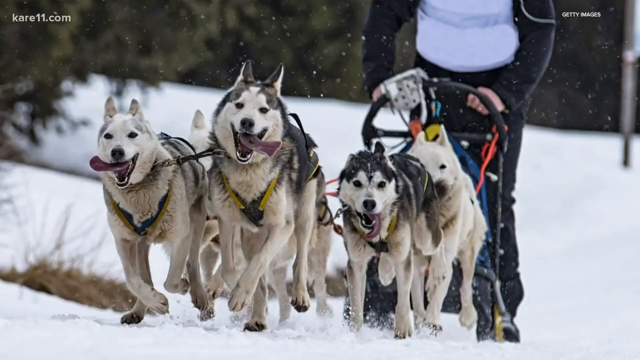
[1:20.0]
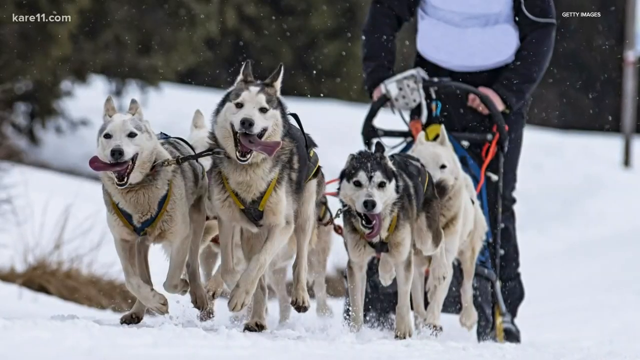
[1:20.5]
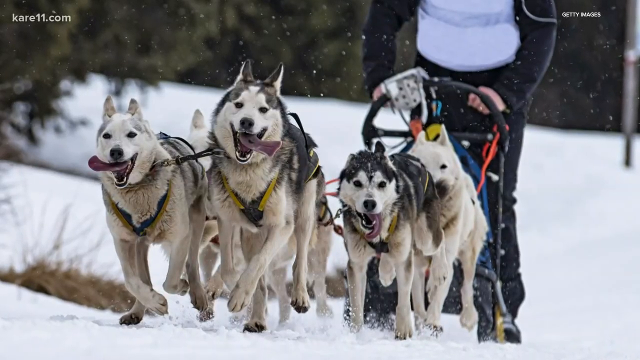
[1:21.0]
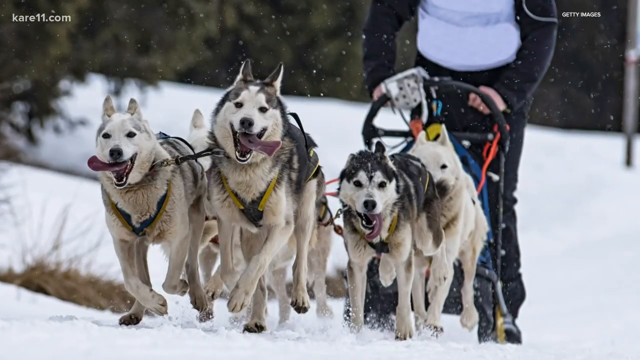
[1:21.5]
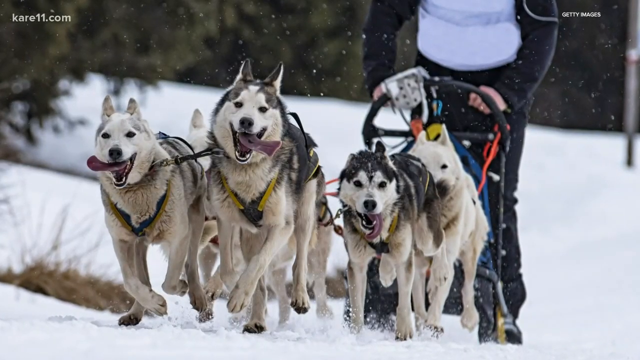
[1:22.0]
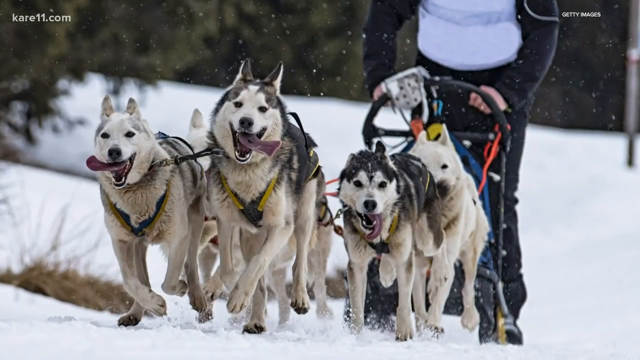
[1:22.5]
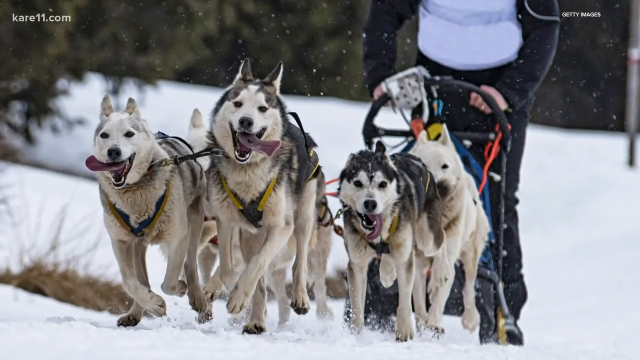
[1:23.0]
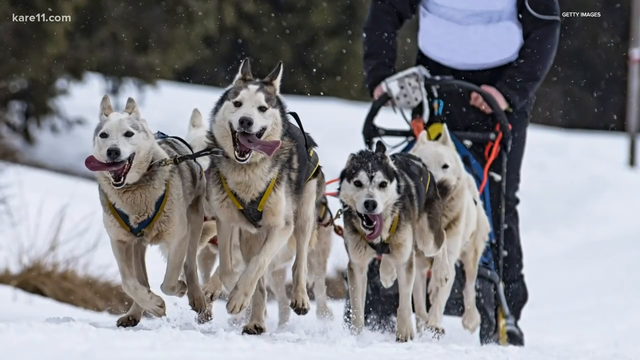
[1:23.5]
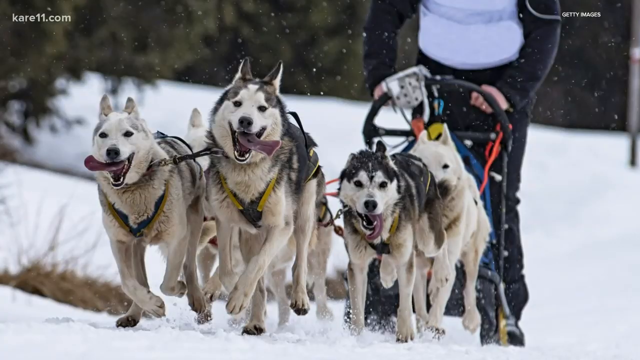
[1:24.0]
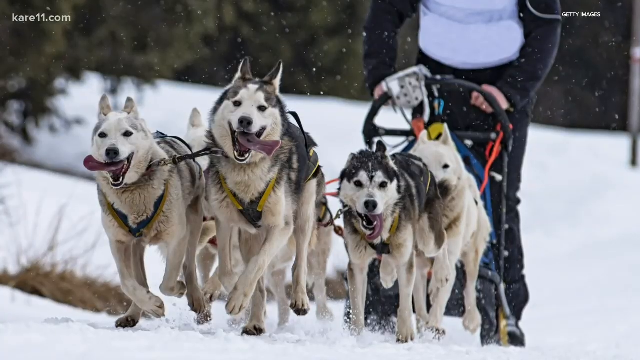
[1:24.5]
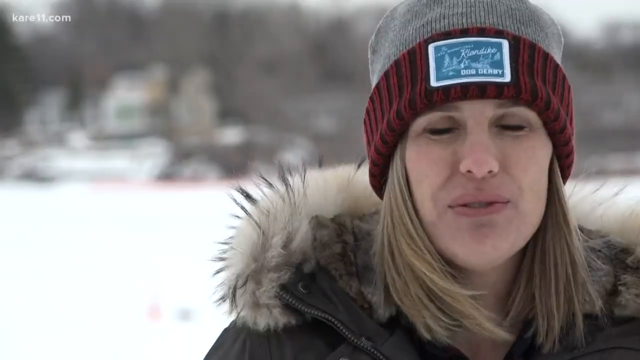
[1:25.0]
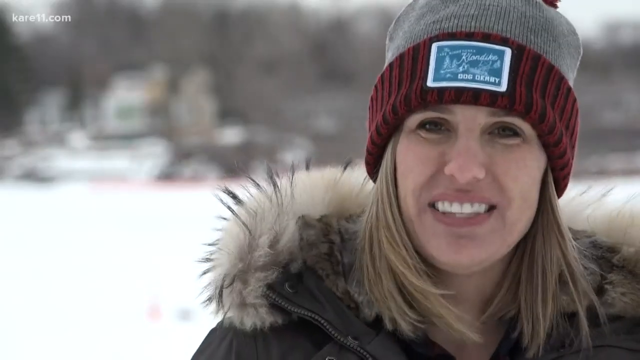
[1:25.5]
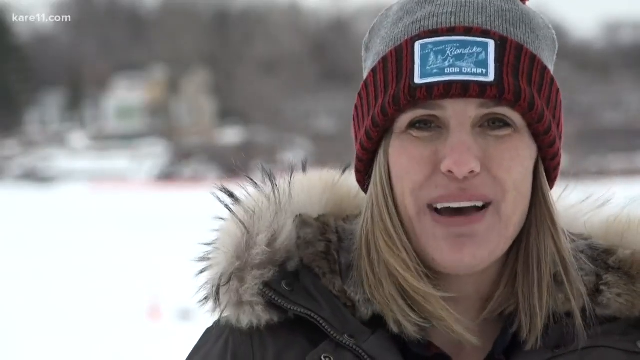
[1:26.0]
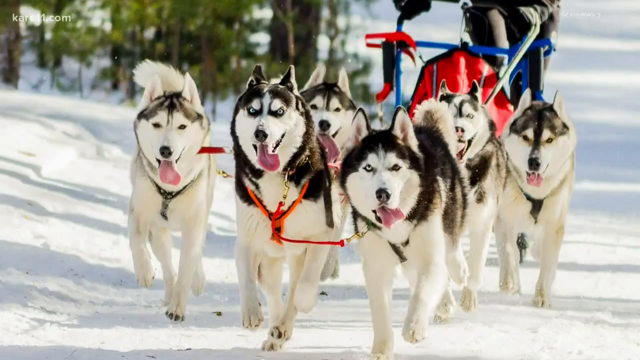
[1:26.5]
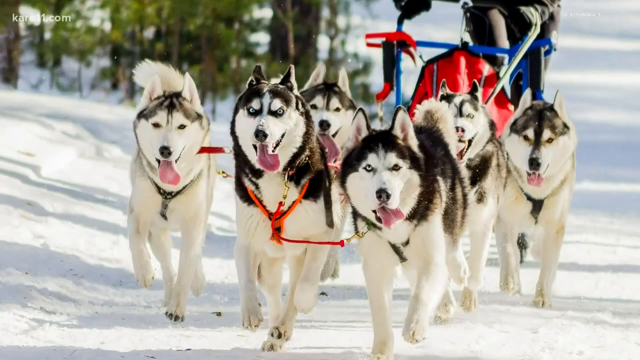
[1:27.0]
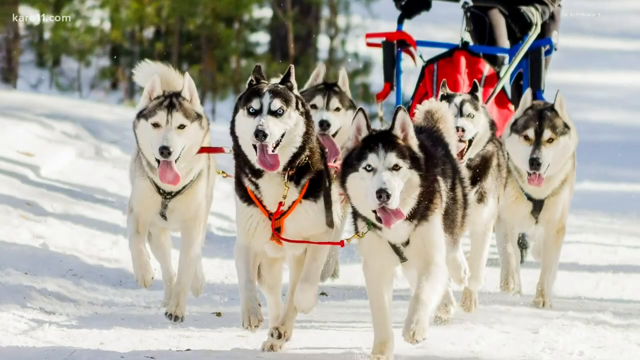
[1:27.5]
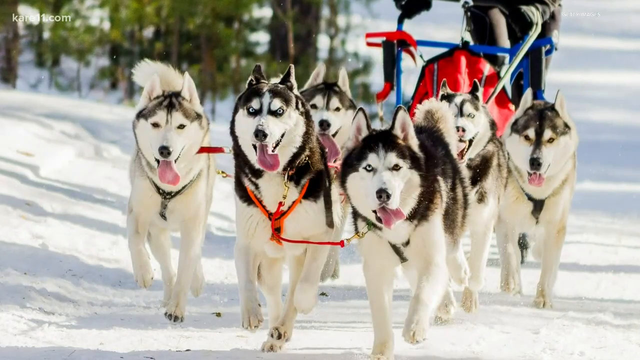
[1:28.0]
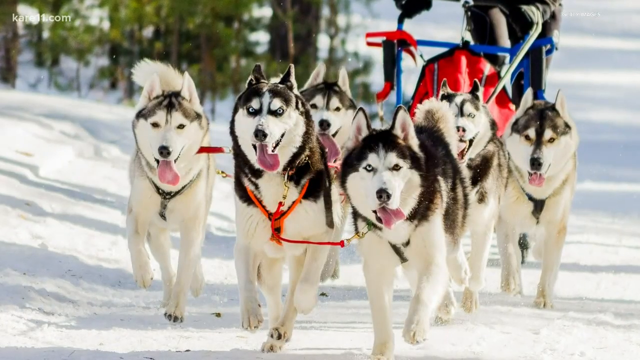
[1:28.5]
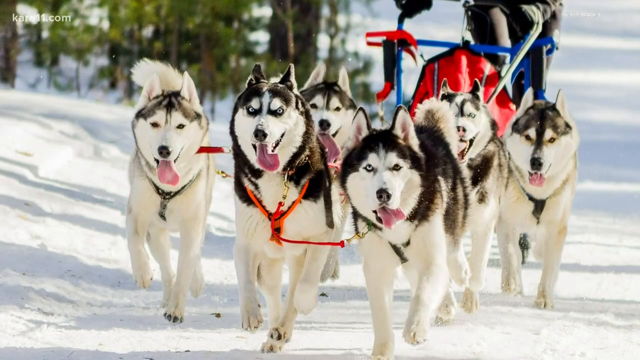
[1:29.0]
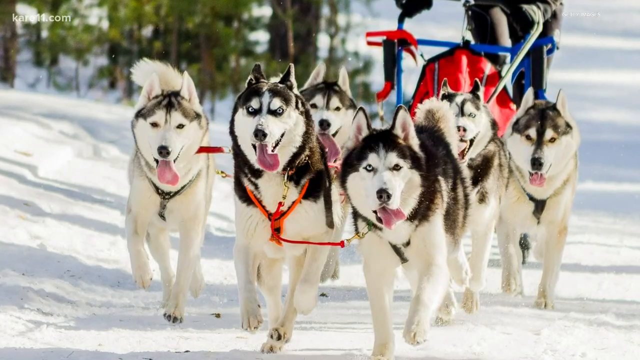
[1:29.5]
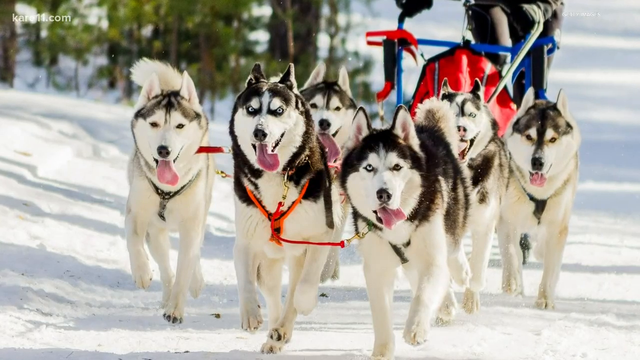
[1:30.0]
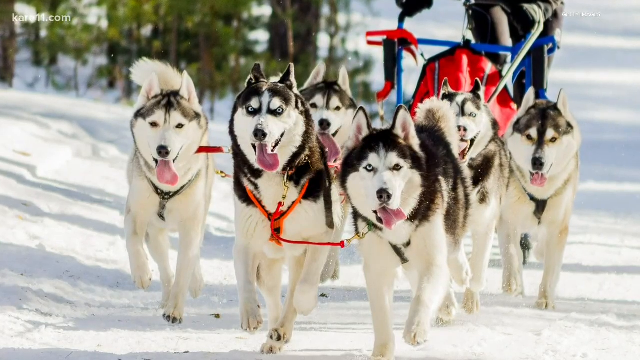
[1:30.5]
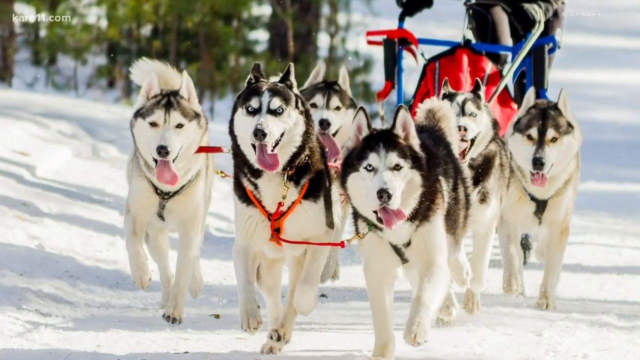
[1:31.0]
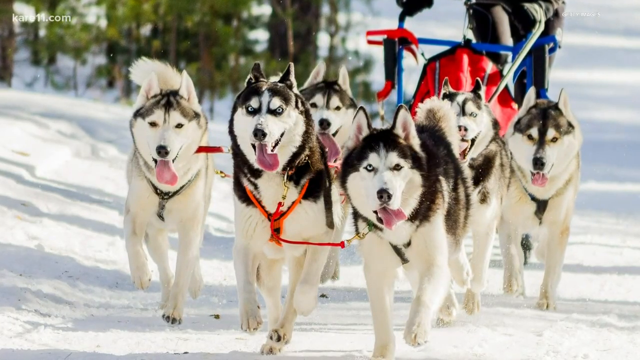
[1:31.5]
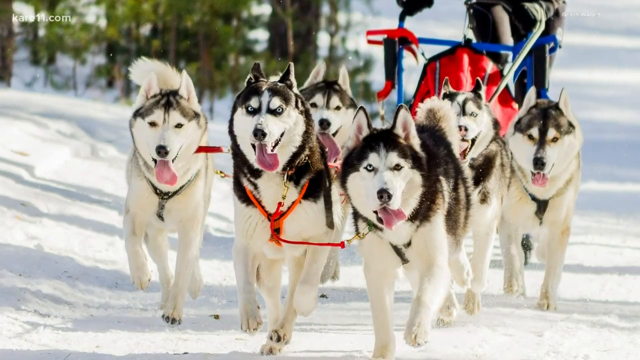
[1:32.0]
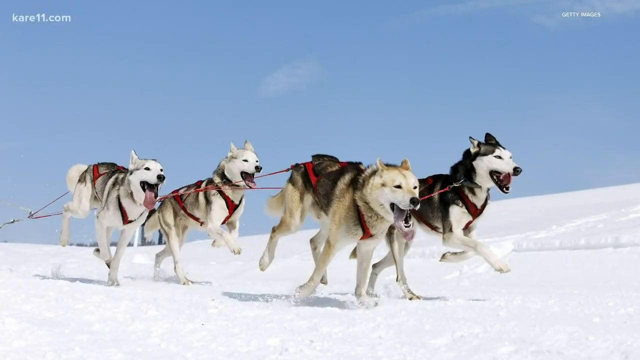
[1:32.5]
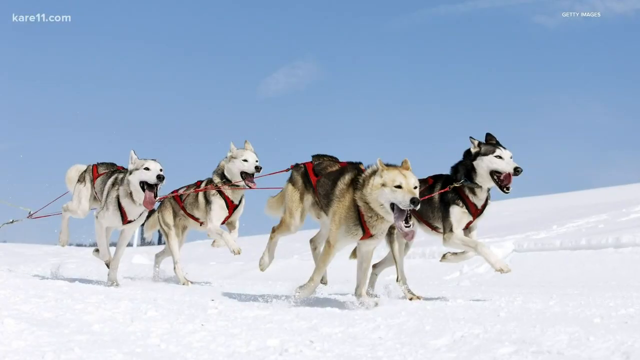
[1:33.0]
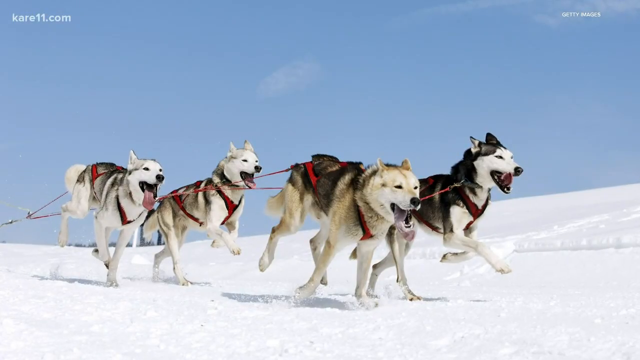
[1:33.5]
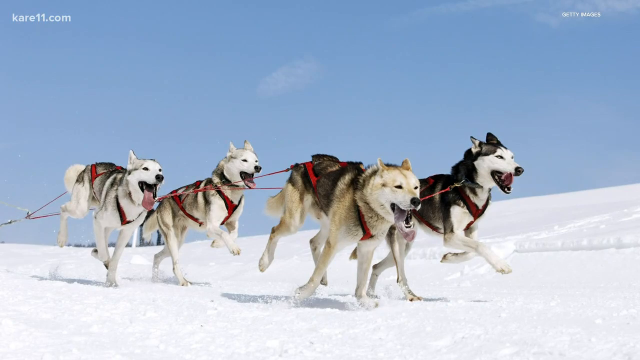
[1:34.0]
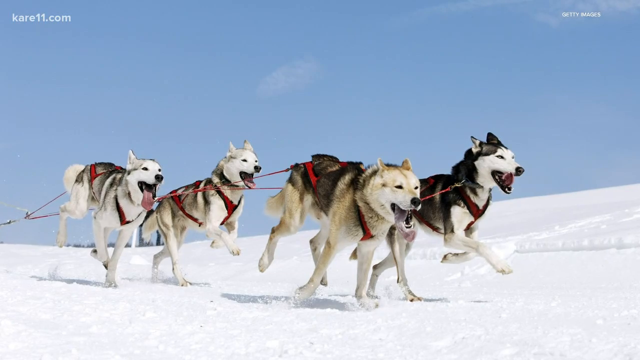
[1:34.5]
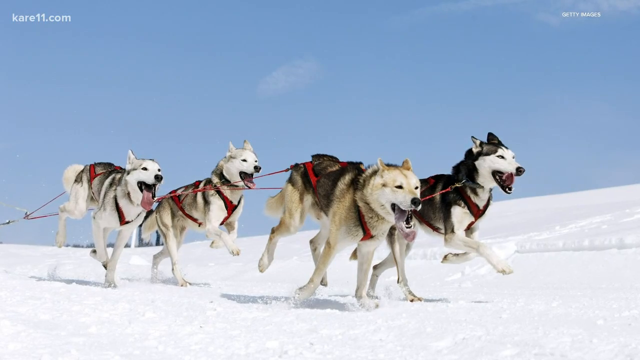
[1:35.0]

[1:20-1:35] A still picture shows a team of huskies pulling a sled, seen from the front, with their faces visible, tongues hanging out and muscles rippling as they pull. The person at the back of the sled wears a black jacket with a white shirt and black pants. A small white watermark reading "KARE11.com" is in the upper left corner, and to the right of it is a smaller white watermark reading "Getty Images". The video then moves to another frontal picture of a team of huskies of various colors, black and white, pulling a sled that has blue and red on it.